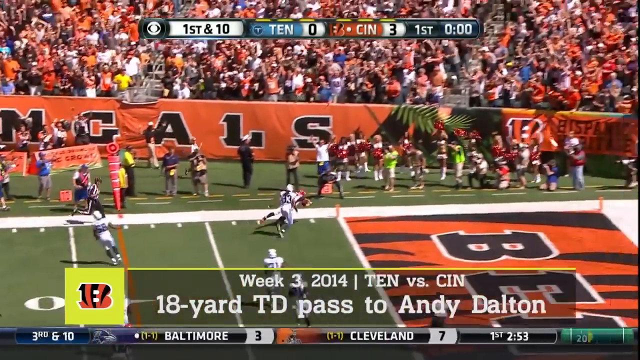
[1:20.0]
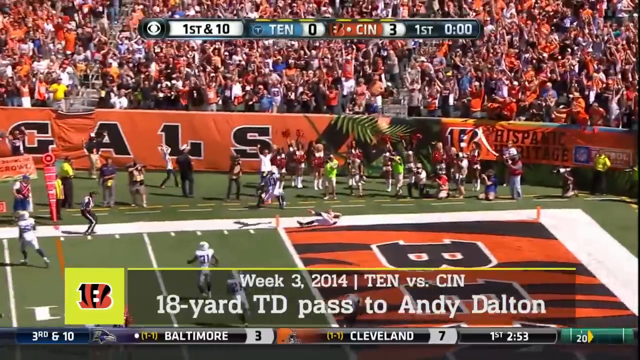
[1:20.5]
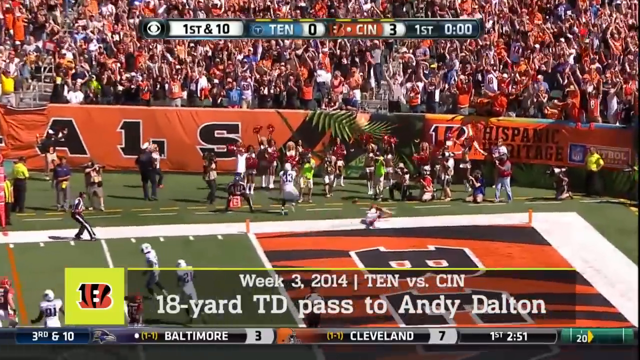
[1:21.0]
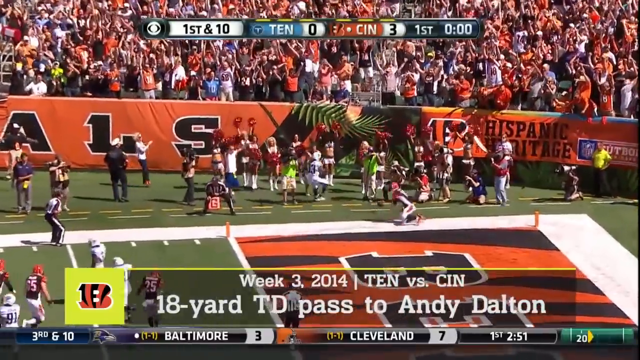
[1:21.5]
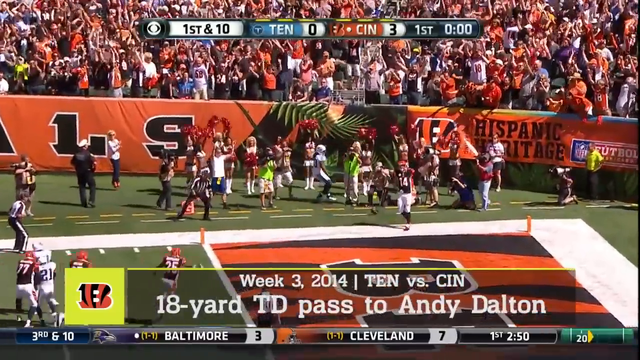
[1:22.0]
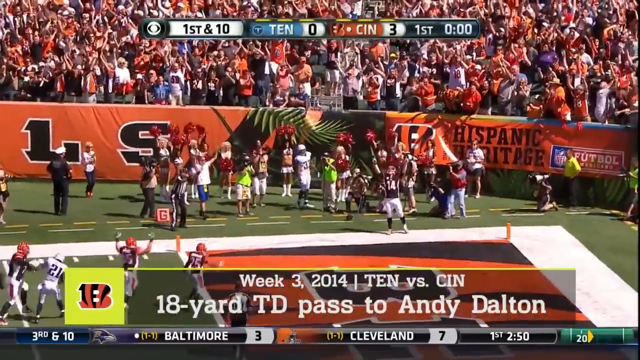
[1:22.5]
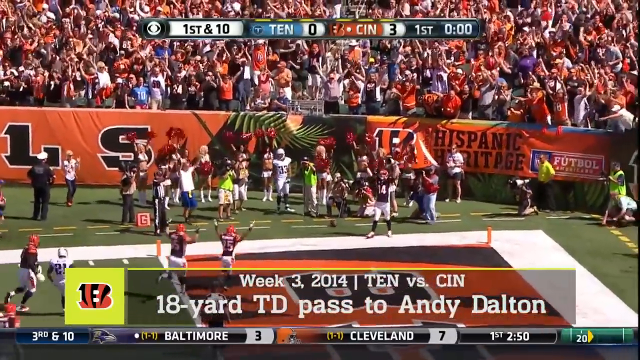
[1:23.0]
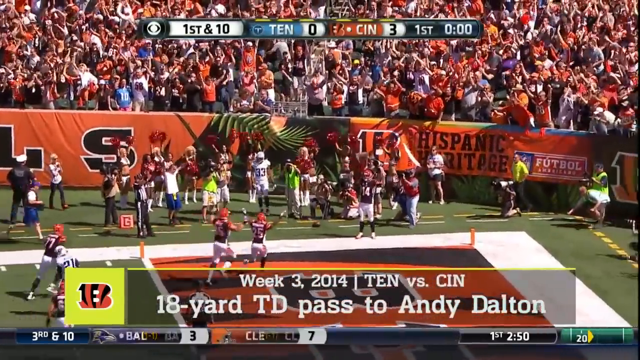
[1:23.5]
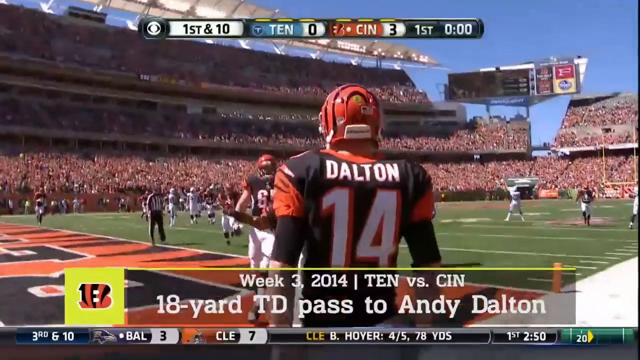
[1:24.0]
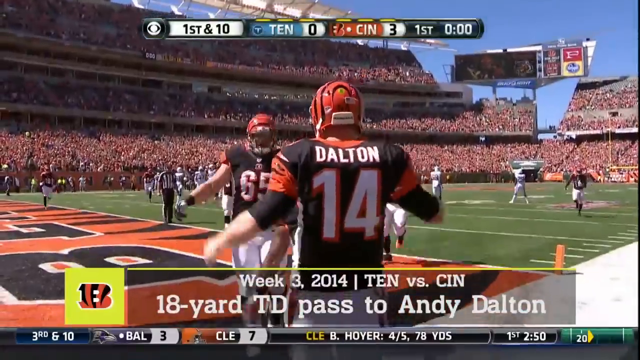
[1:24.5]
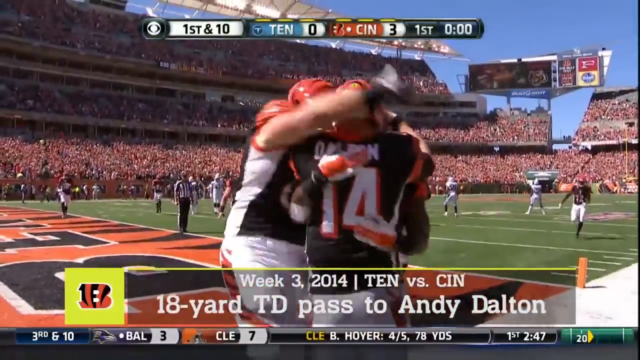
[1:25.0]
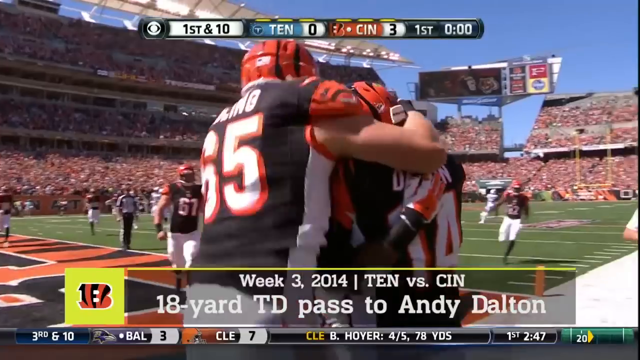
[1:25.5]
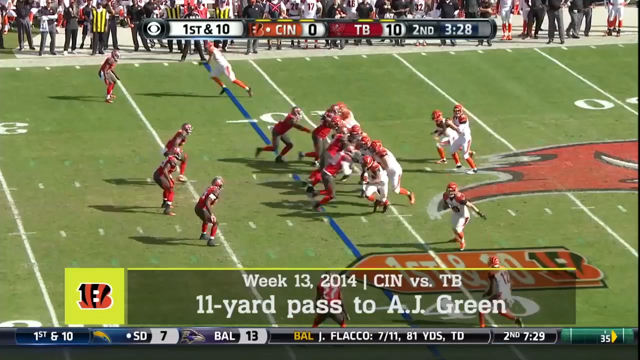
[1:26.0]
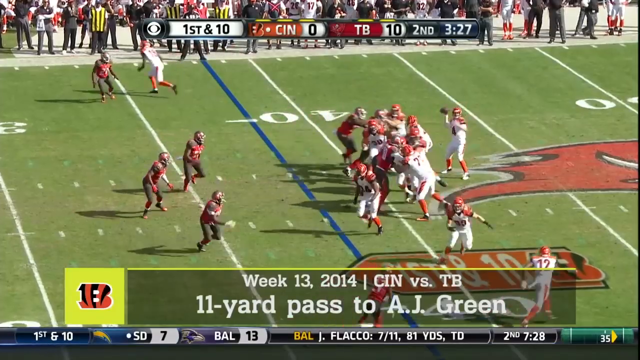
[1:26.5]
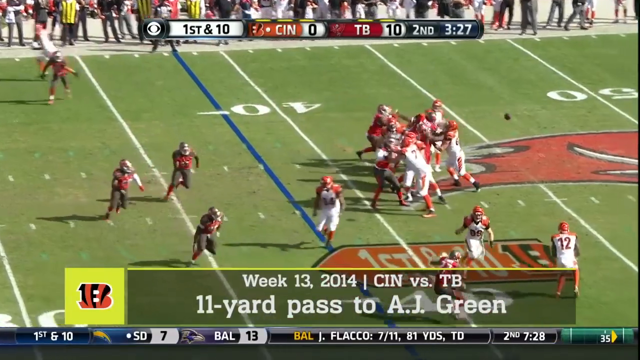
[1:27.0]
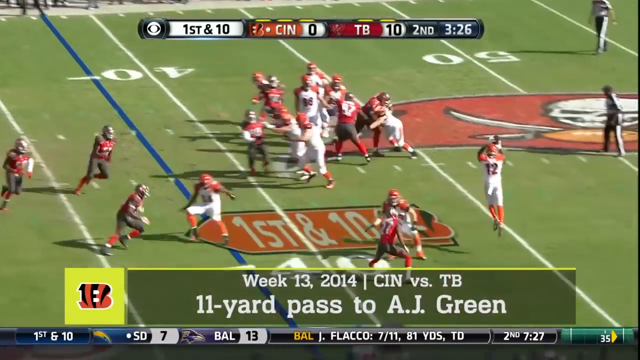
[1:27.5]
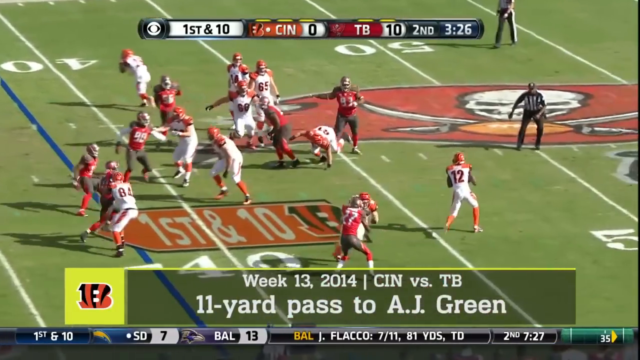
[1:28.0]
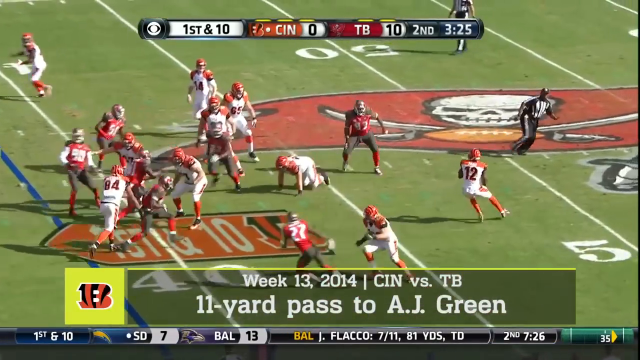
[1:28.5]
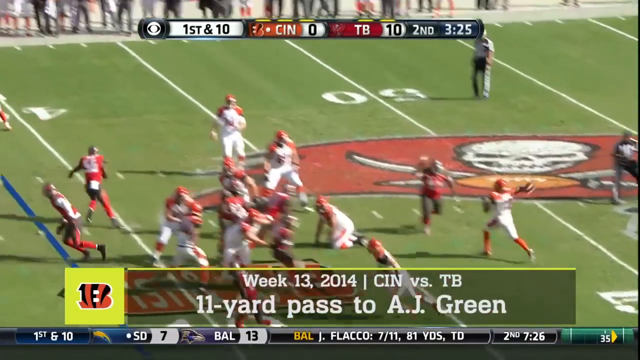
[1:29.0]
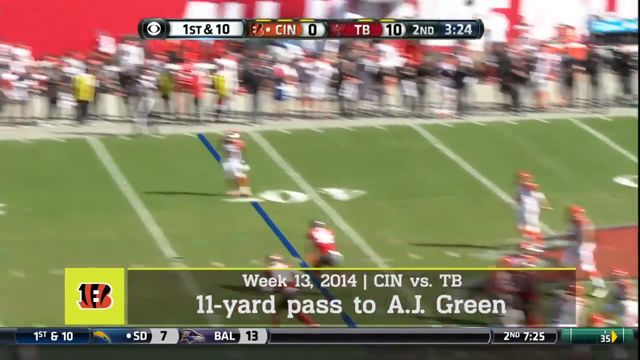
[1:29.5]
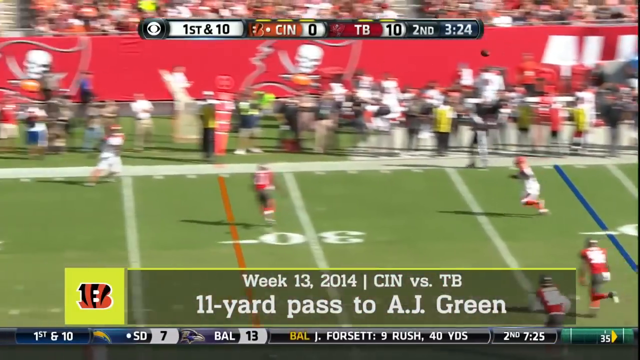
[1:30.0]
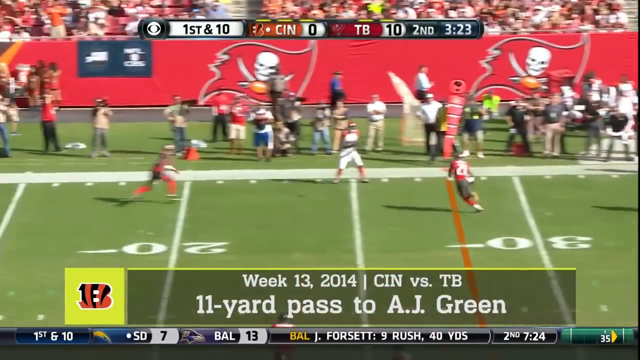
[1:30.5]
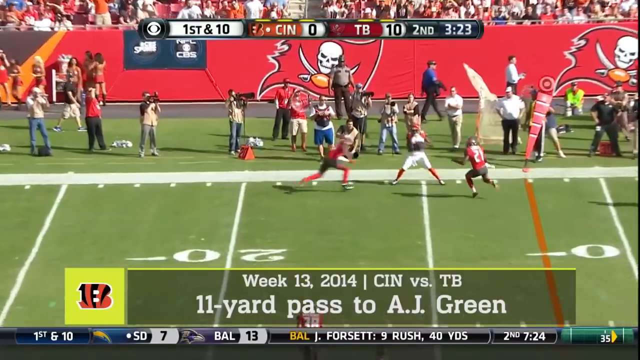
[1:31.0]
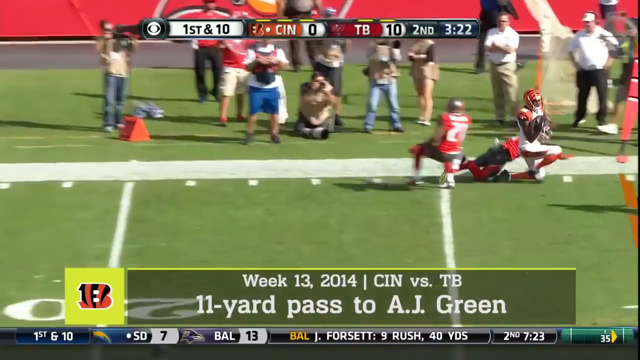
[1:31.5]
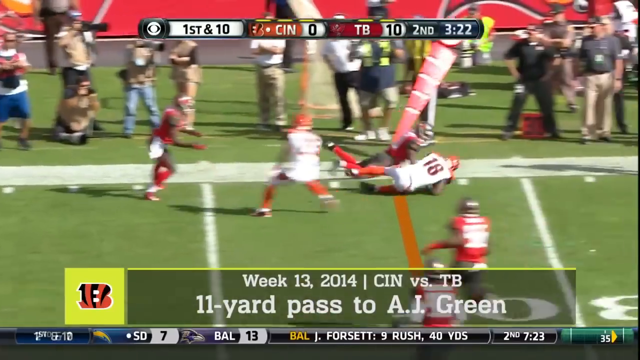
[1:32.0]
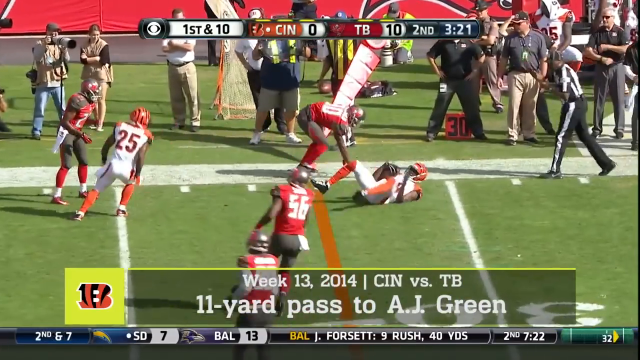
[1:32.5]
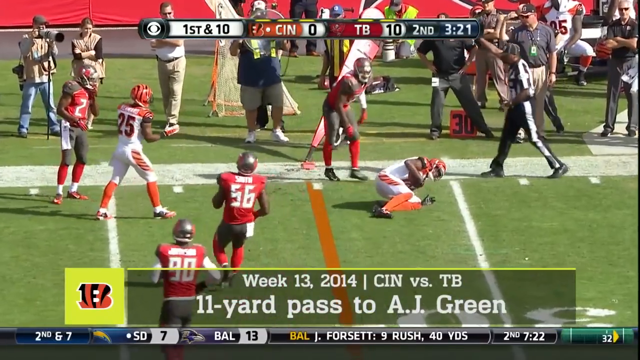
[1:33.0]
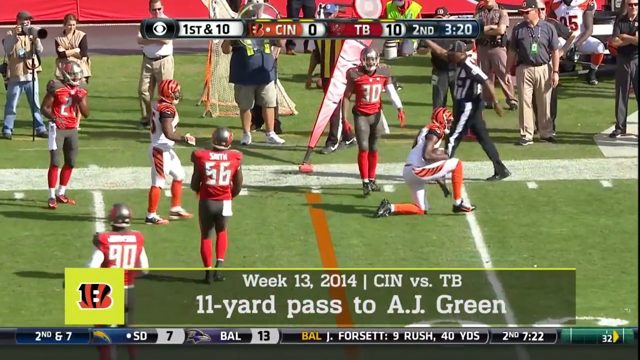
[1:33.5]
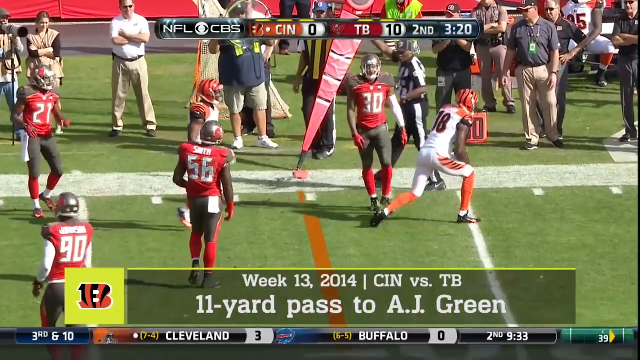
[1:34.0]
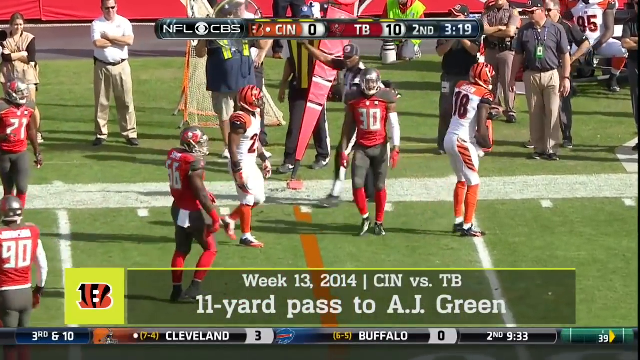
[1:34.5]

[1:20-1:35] A touchdown is scored, and the player whose jersey reads "Dalton" in white letters, number 14, gets up and is congratulated by two or three teammates. The camera cuts to another play, with a translucent banner at the bottom reading "Week 13, 2014, CIN vs. TB, 11-yard pass to AJ Green". The team in white uniforms has the ball, and a pass is caught by a player wearing number 18, a tall, slender African-American man in a white and orange uniform. He gets up after the catch, and the camera cuts to another play in motion.